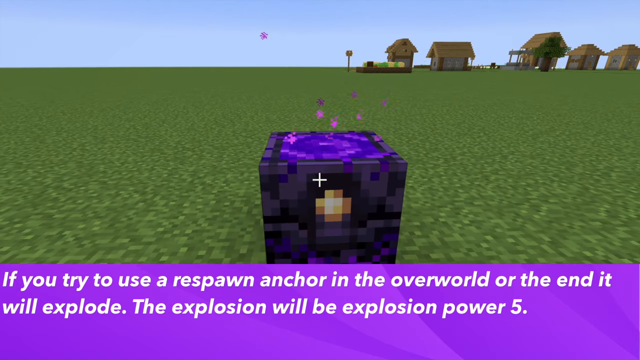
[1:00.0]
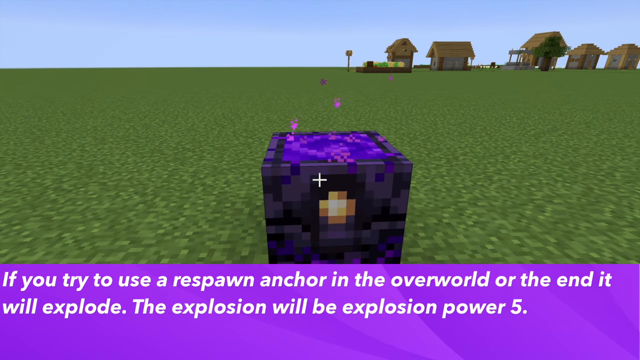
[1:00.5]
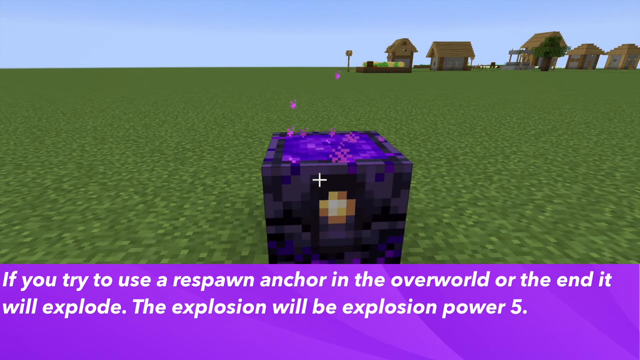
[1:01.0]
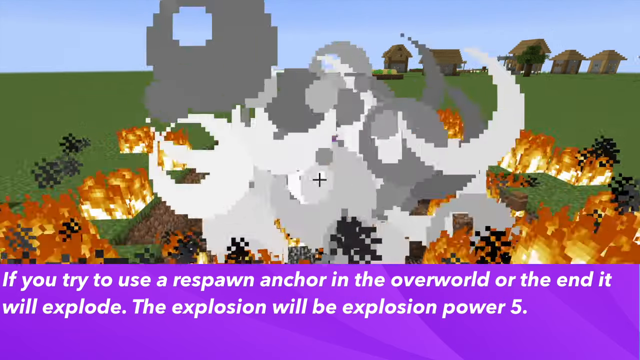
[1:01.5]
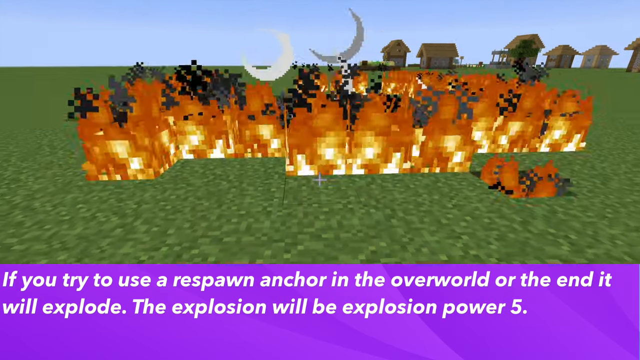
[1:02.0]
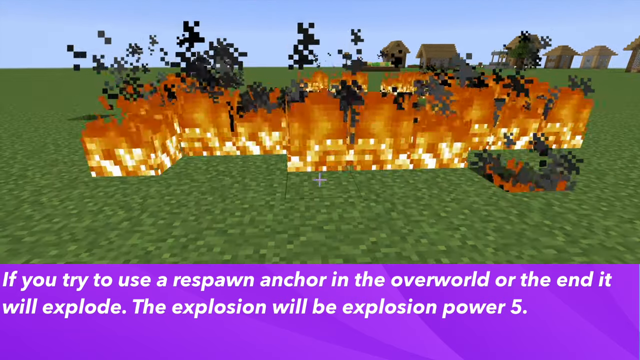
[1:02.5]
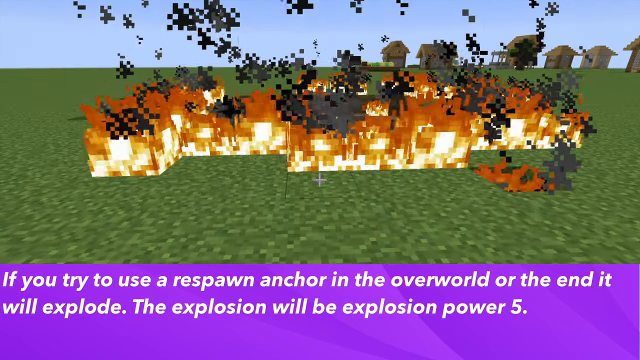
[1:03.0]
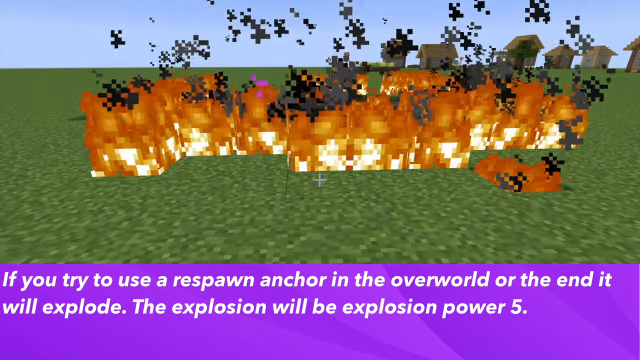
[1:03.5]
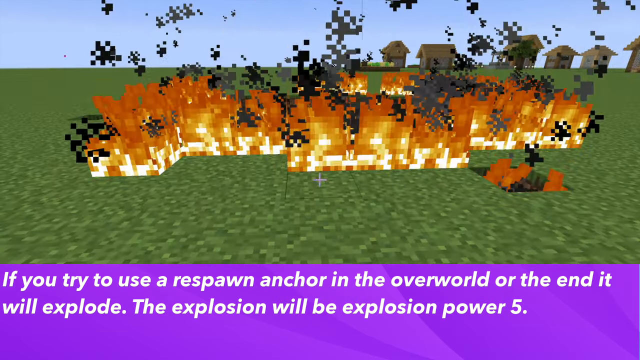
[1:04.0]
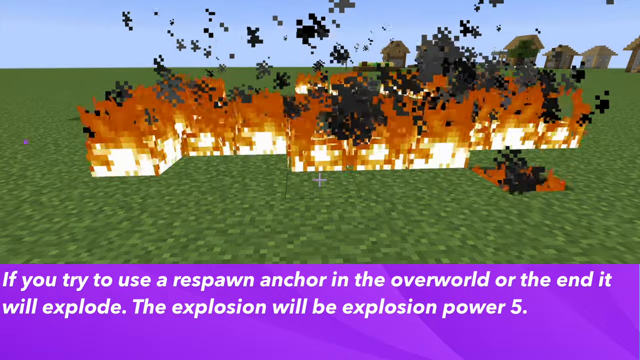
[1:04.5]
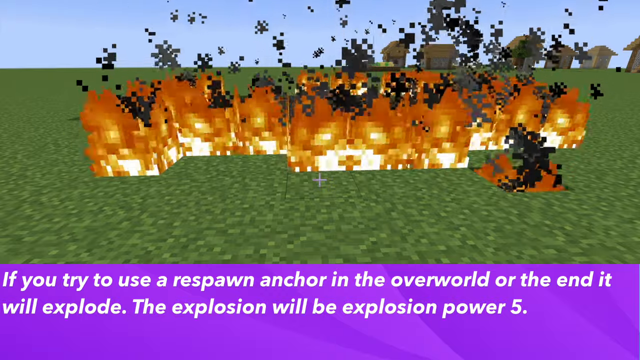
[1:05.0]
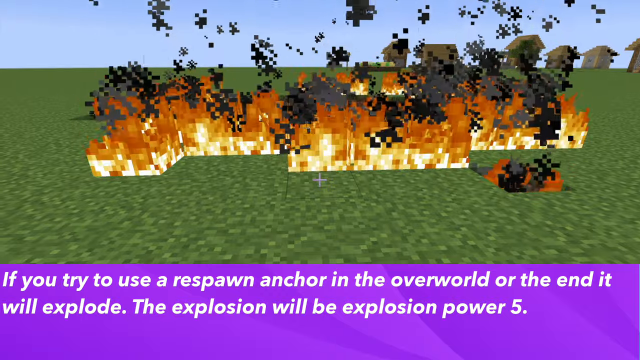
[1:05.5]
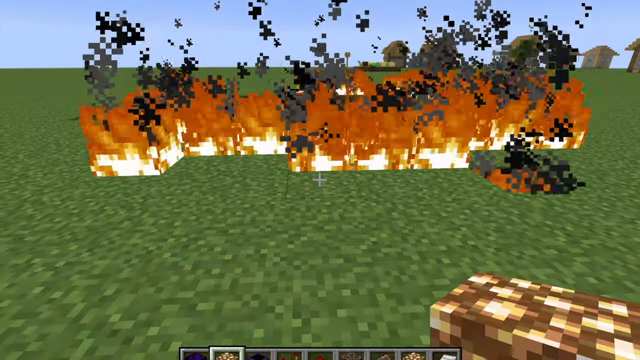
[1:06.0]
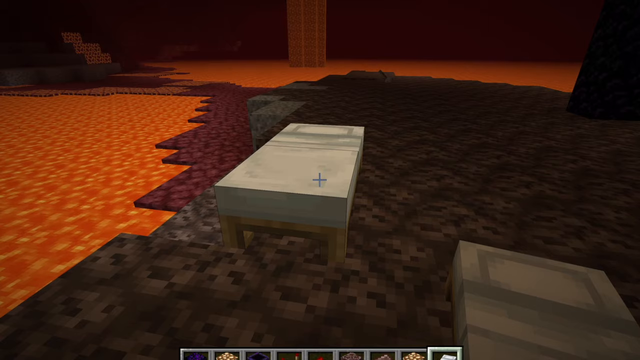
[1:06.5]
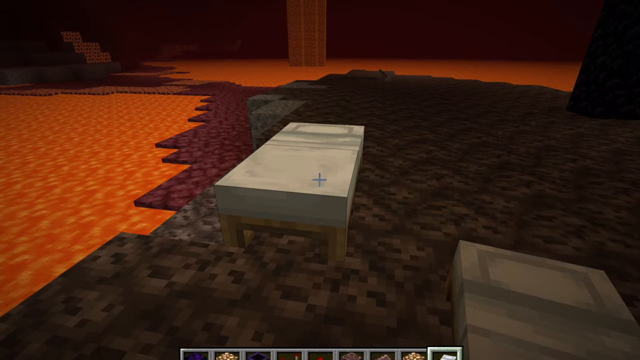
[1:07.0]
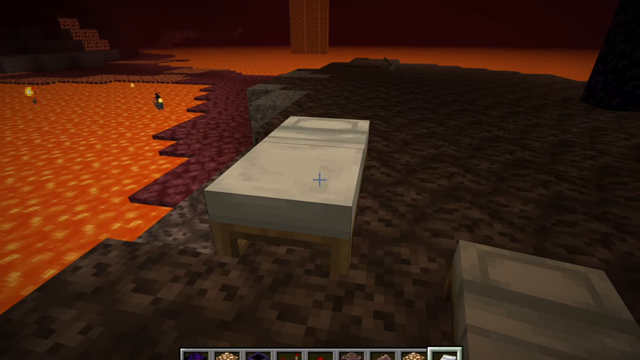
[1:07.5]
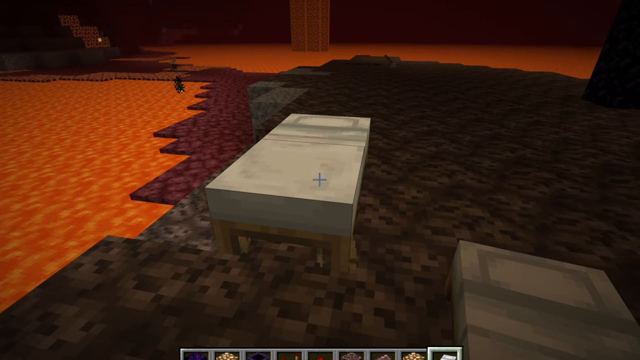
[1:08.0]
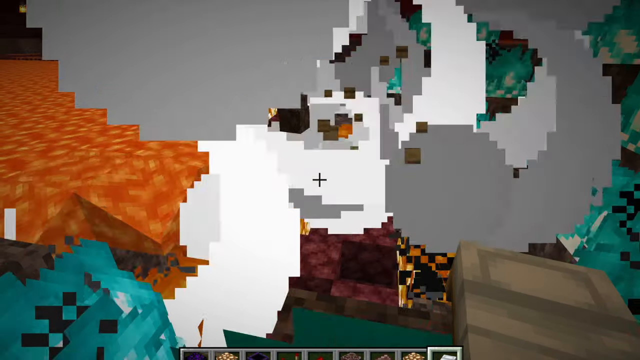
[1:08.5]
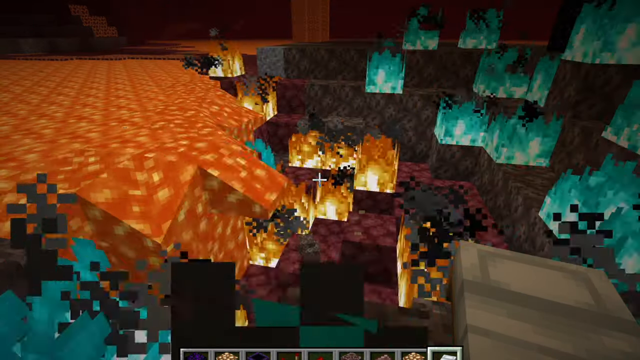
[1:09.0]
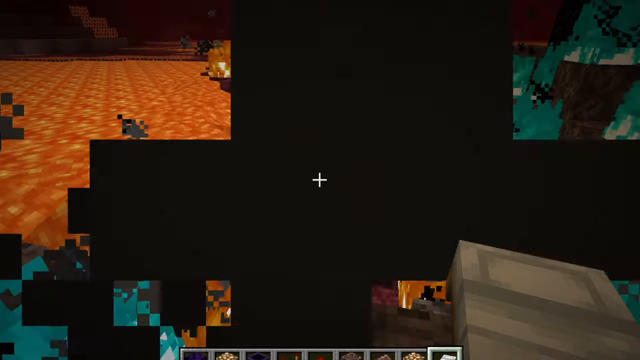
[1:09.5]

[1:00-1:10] On-screen text reads "If you try to use a respawn anchor in the overworld or at the end, it will explode" and mentions an "explosion power of five." The purple box is now in the middle of a large, all-green field, with sheds or cabins off in the distance on the right side. An explosion occurs and causes a fire.